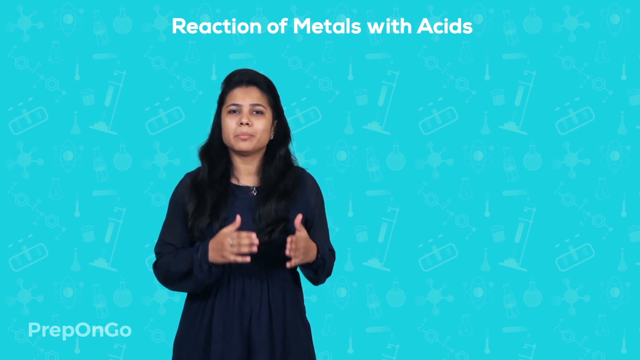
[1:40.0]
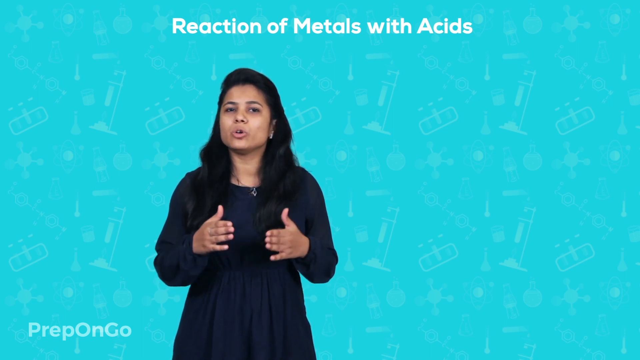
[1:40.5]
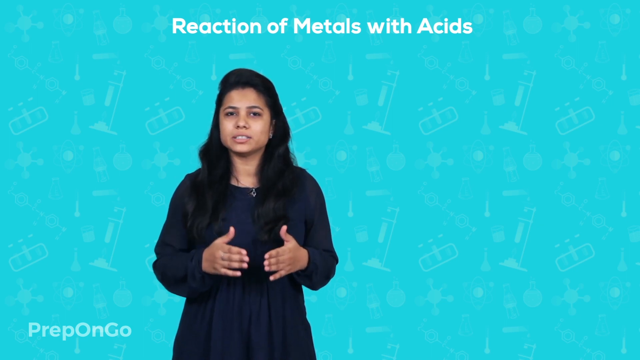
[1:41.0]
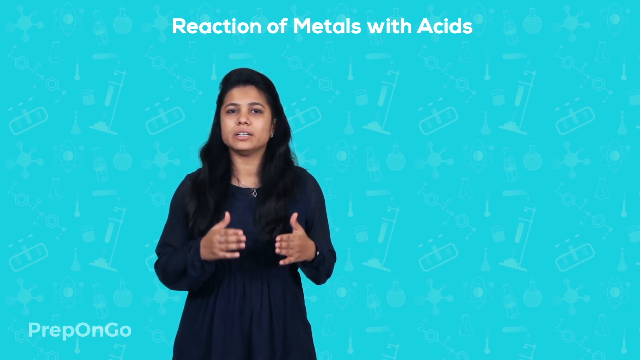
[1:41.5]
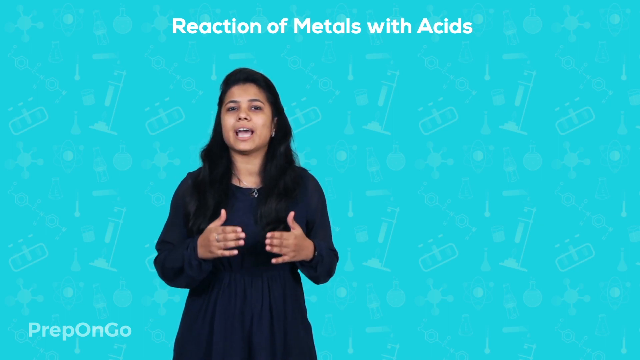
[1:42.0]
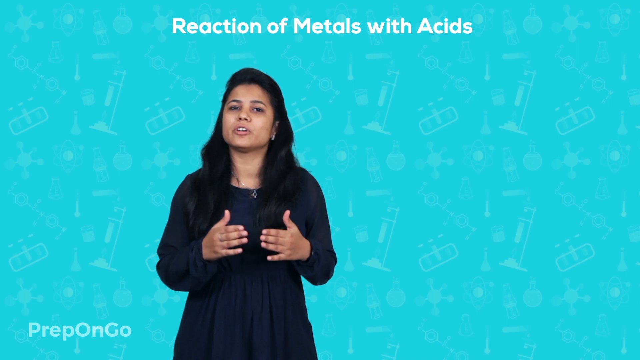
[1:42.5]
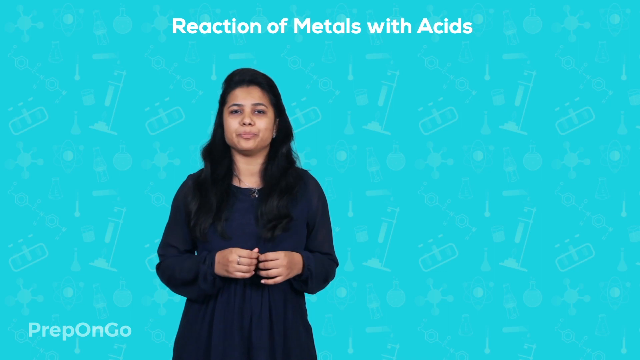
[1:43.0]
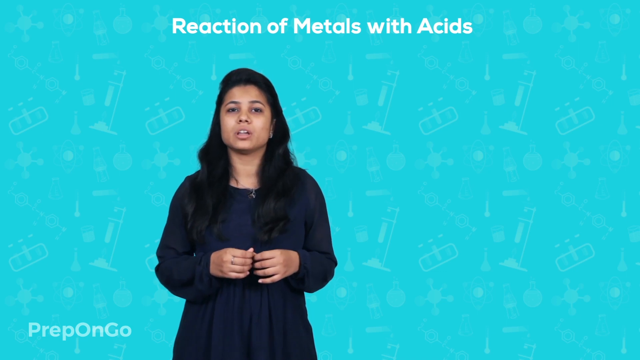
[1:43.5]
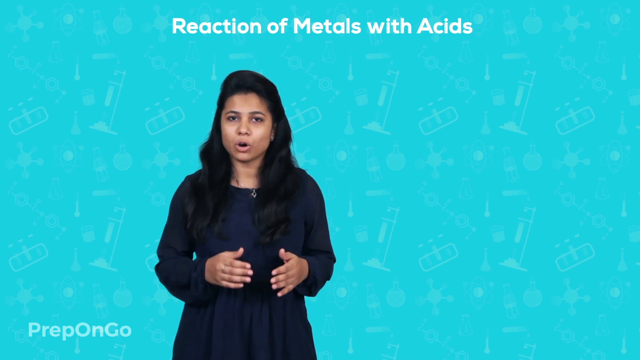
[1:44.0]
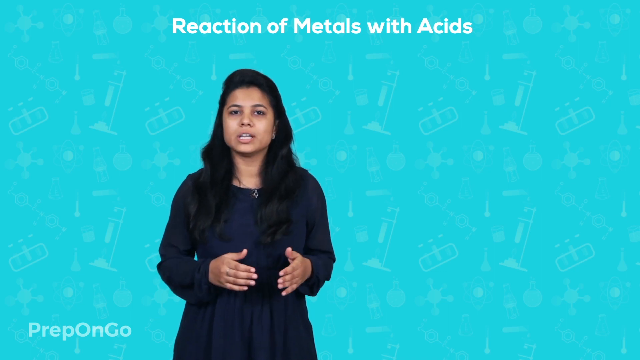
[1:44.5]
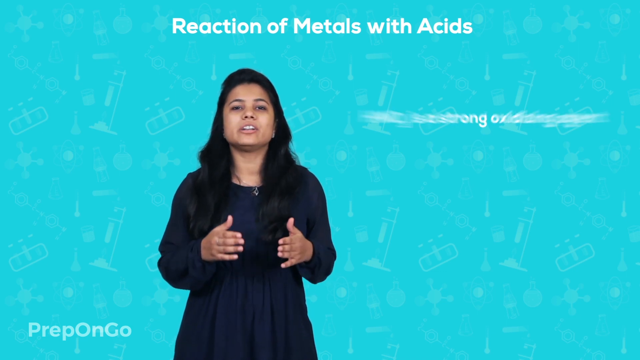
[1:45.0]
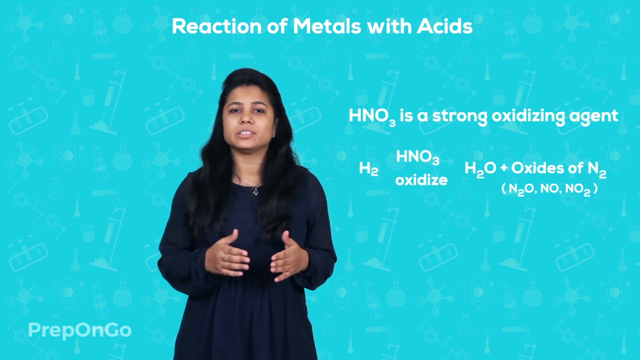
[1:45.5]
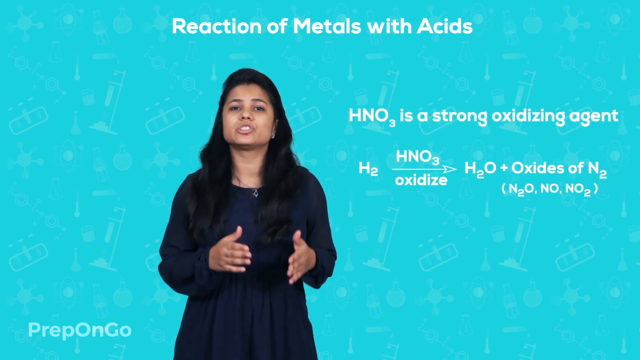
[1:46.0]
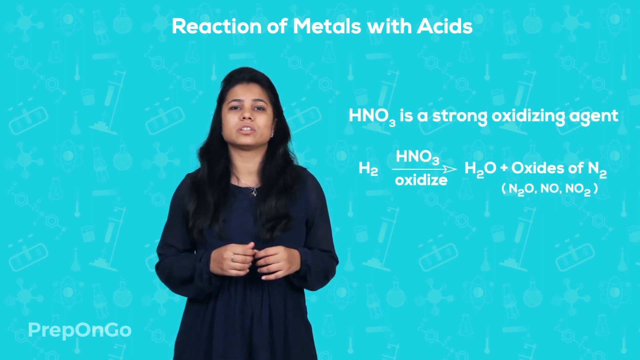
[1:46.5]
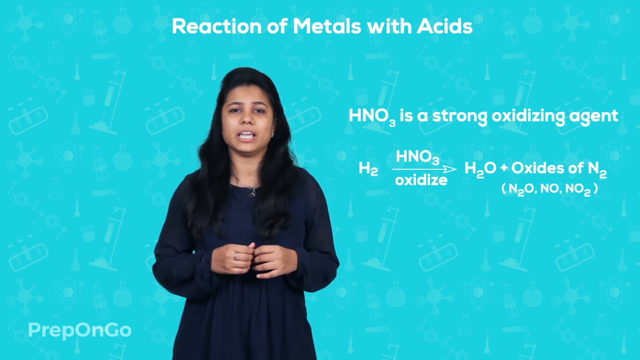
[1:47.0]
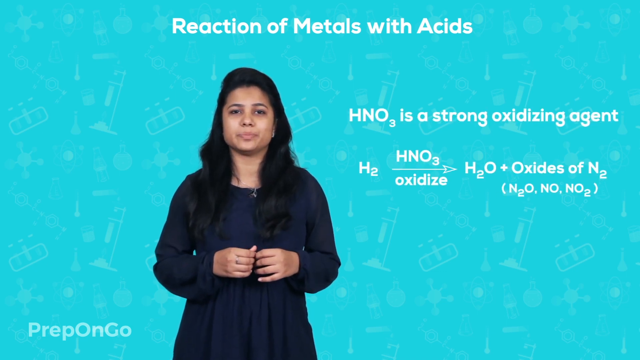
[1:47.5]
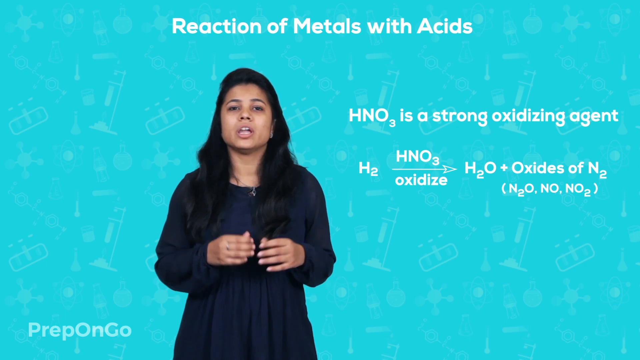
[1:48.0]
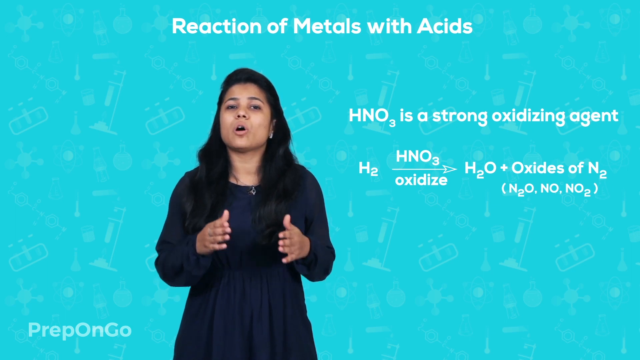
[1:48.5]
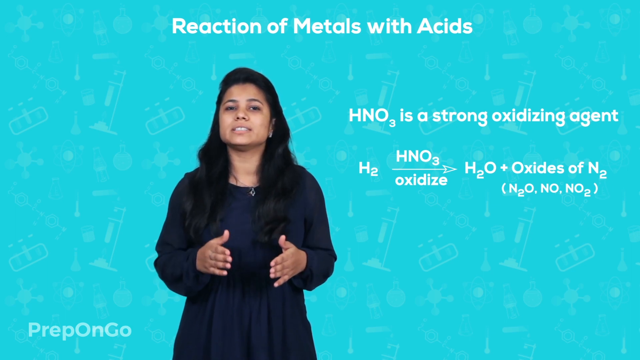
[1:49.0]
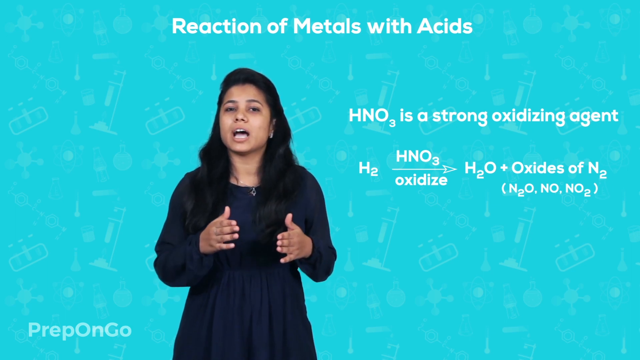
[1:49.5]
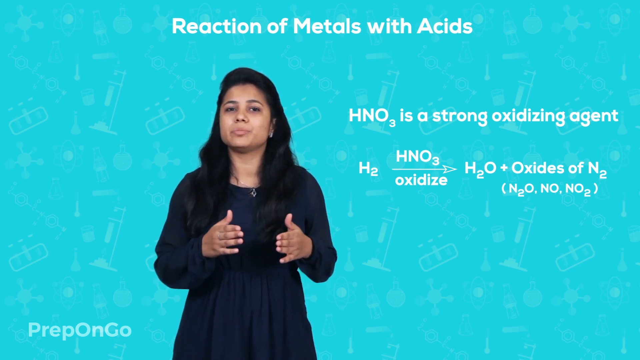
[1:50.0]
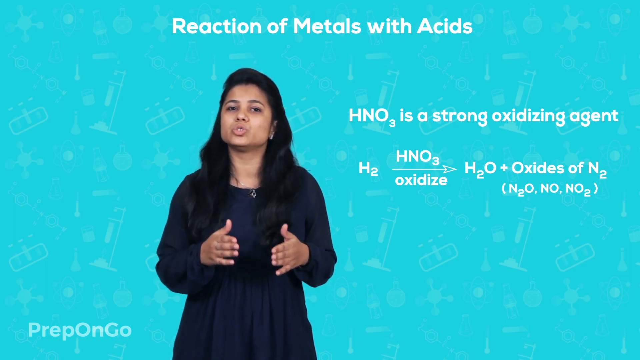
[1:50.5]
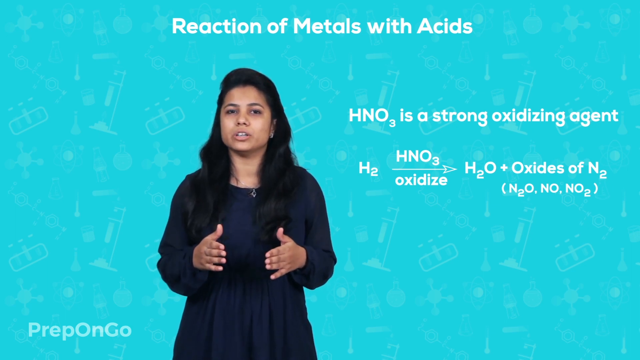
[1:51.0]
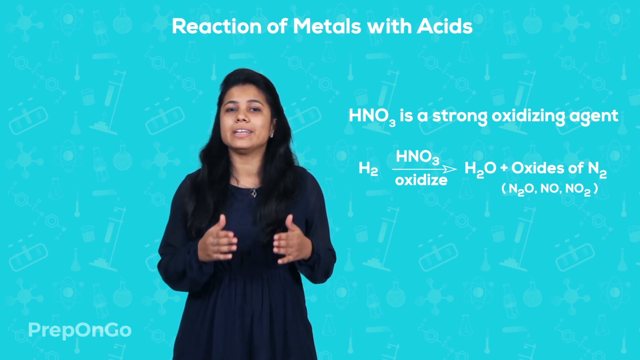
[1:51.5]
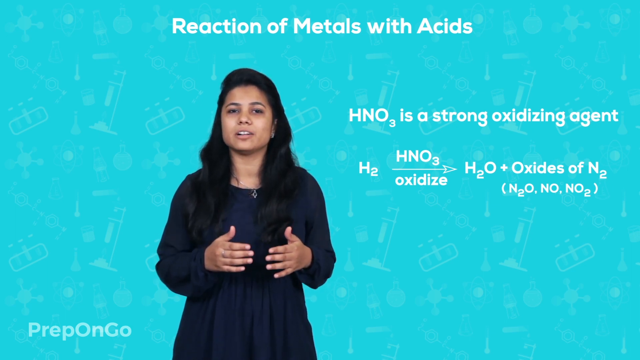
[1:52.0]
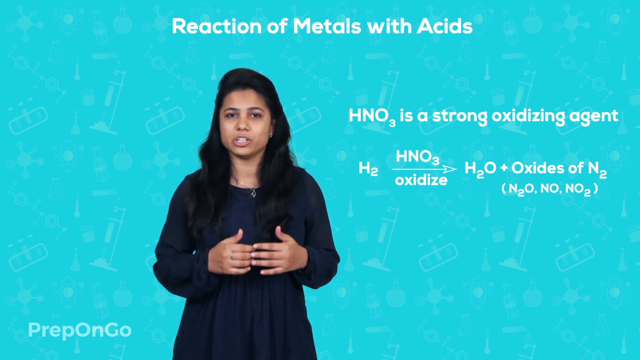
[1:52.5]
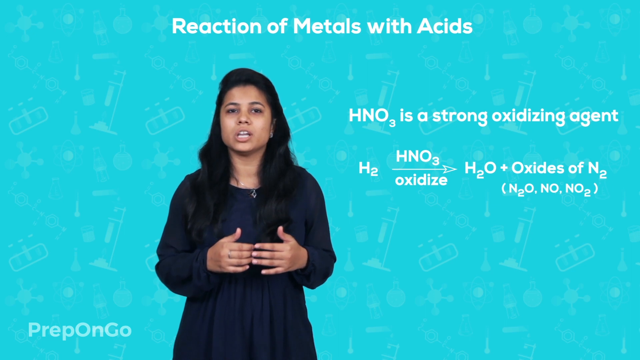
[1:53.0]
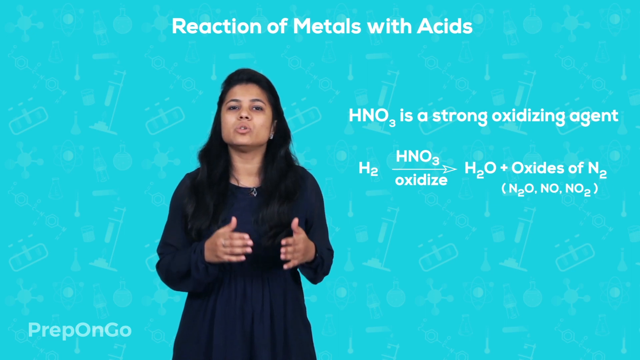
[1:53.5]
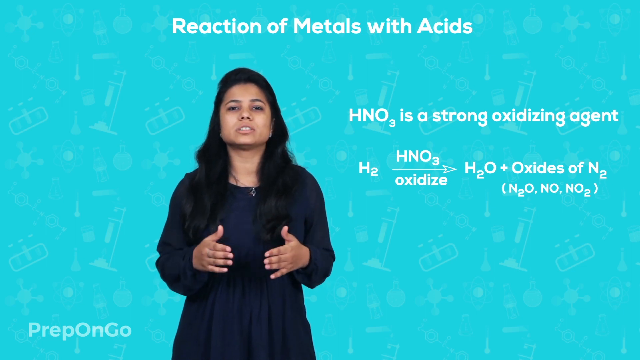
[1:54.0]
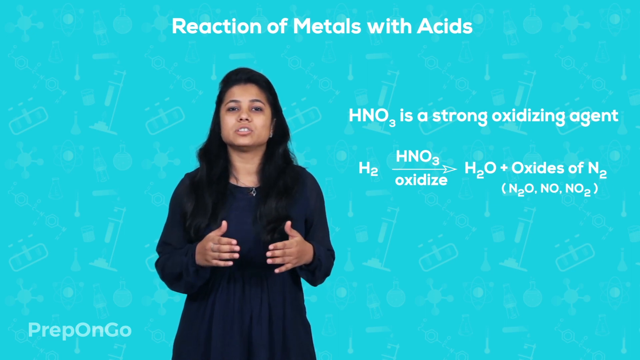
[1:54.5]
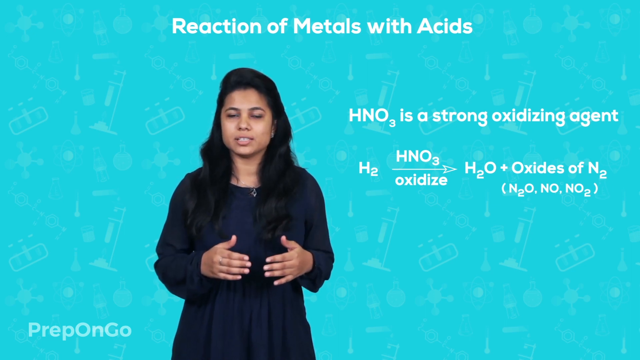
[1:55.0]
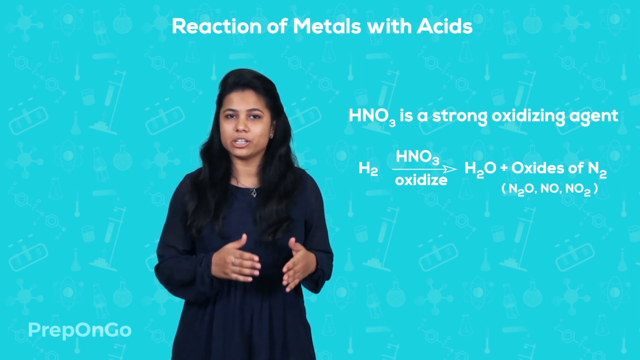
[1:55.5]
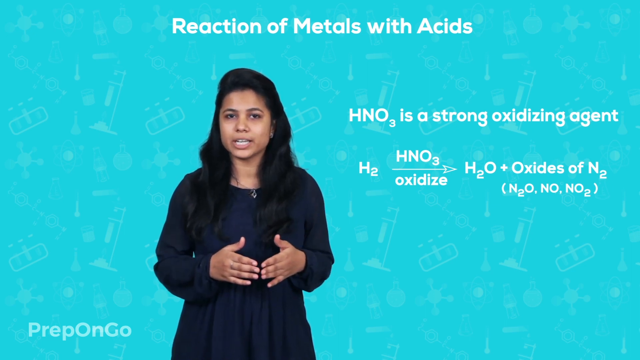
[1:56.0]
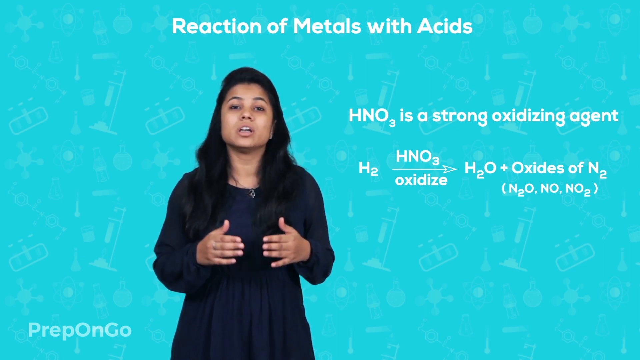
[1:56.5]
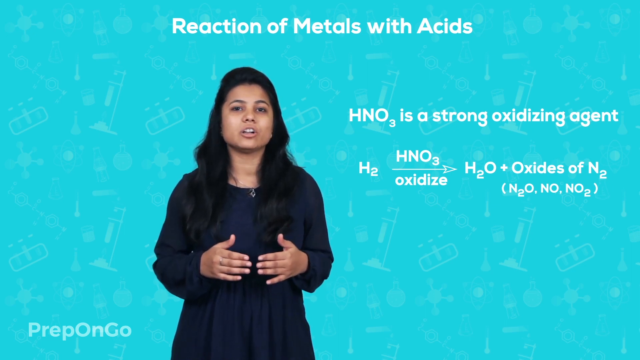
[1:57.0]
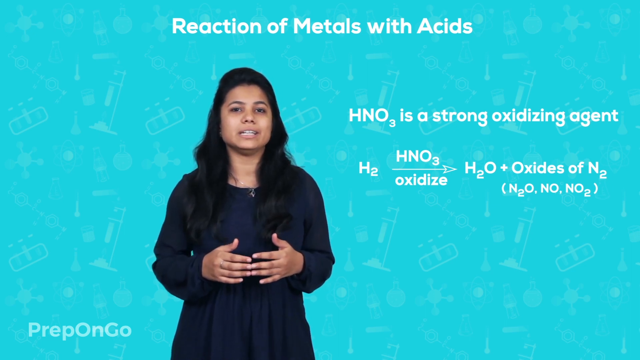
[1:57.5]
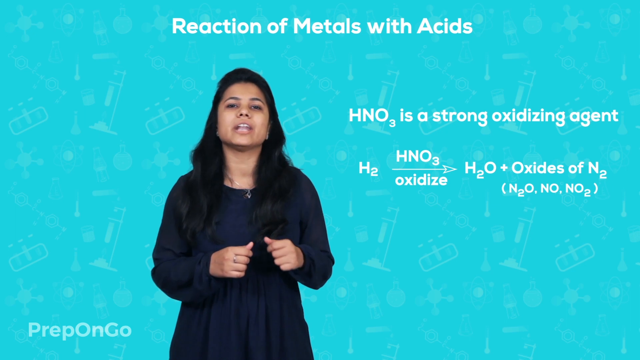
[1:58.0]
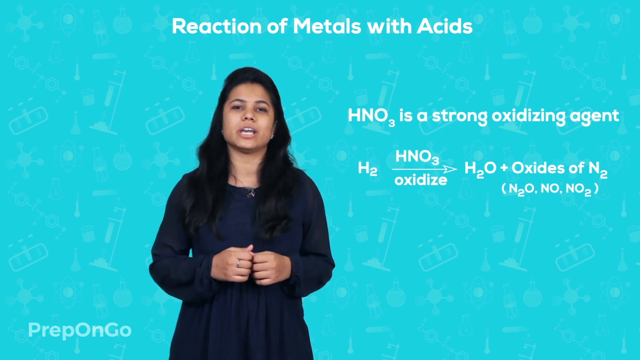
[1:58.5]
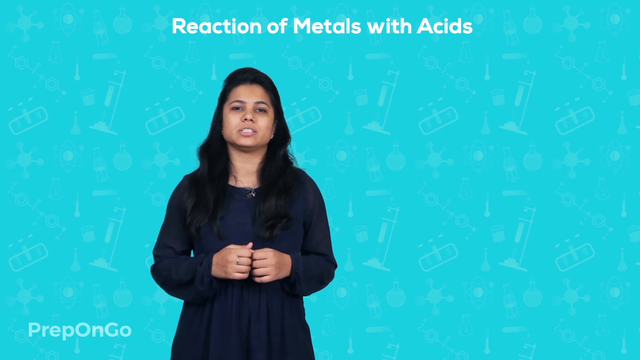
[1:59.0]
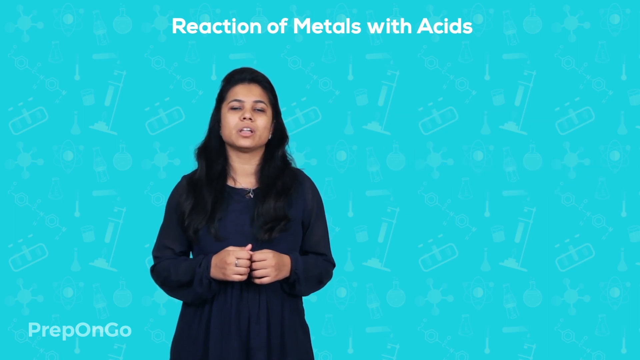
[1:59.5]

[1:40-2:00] The host moves on to the reaction with nitric acid. Text states that HNO3, nitric acid, is a strong oxidizing agent. A diagram shows hydrogen reacting in the presence of nitric acid, which acts to oxidize it, with the reaction yielding water and various oxides of nitrogen: N2O, NO, and NO2.